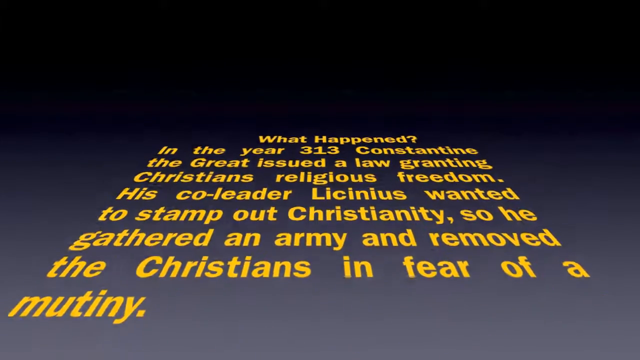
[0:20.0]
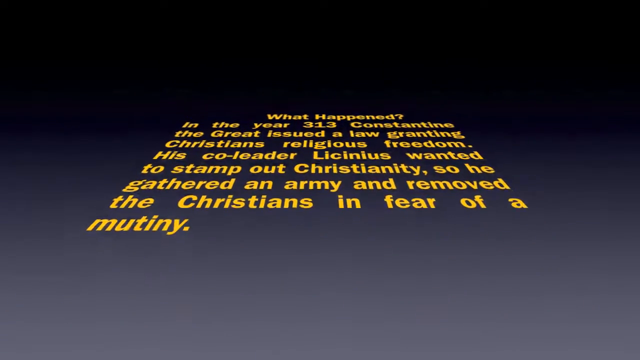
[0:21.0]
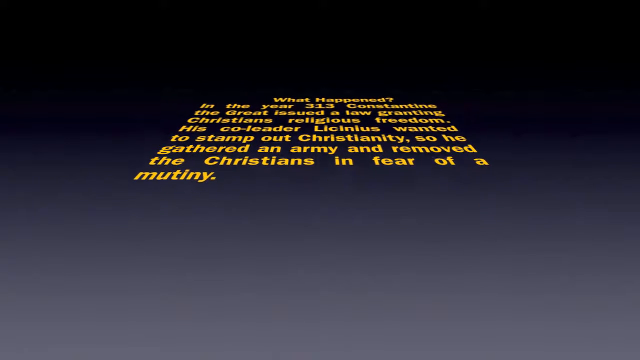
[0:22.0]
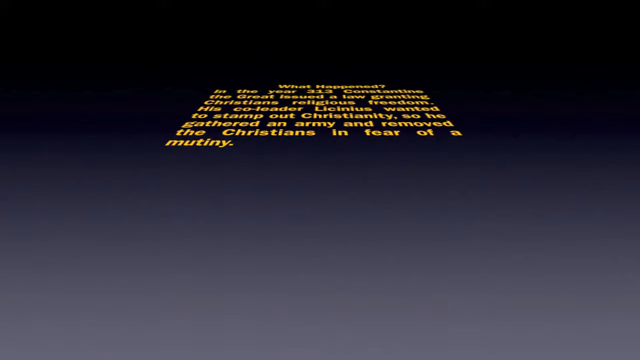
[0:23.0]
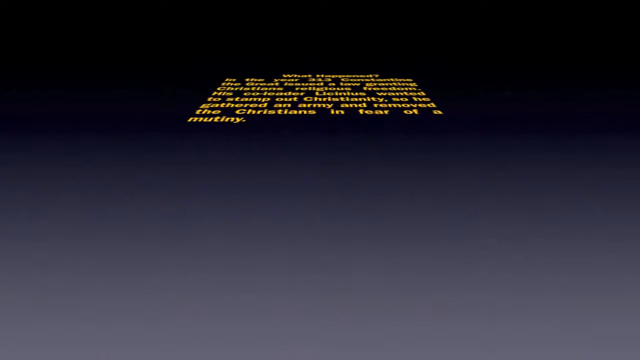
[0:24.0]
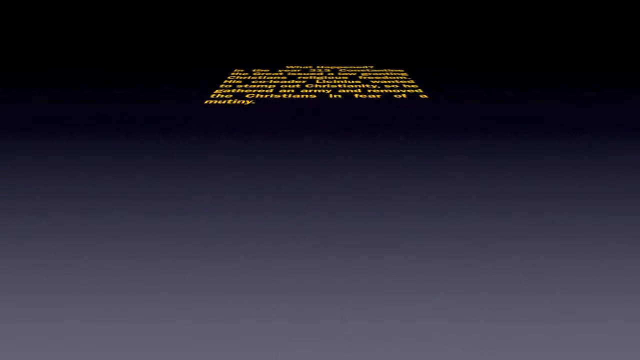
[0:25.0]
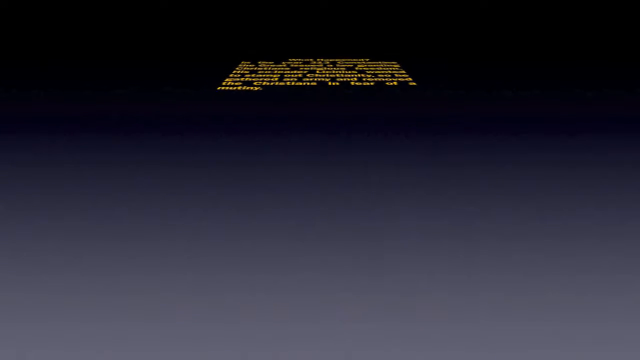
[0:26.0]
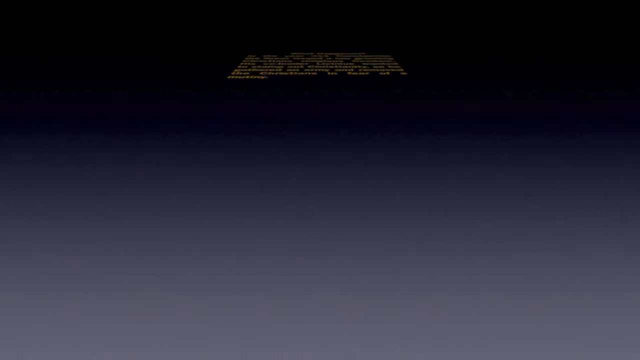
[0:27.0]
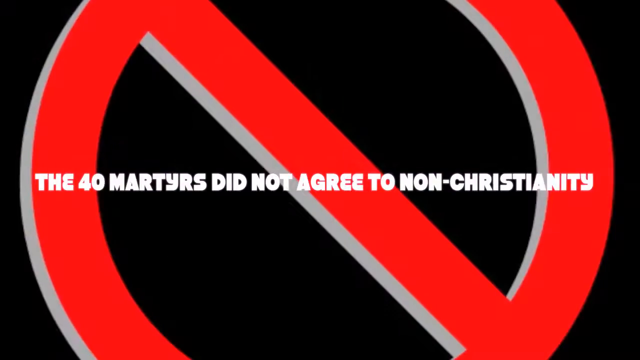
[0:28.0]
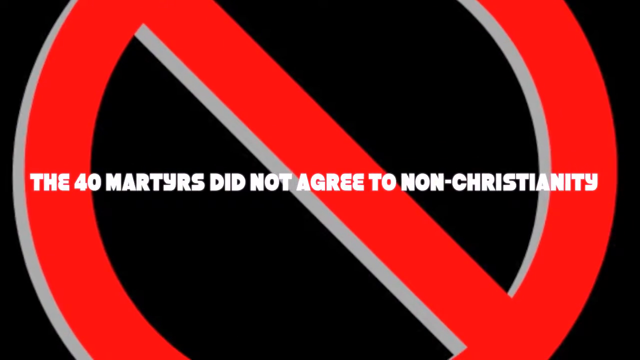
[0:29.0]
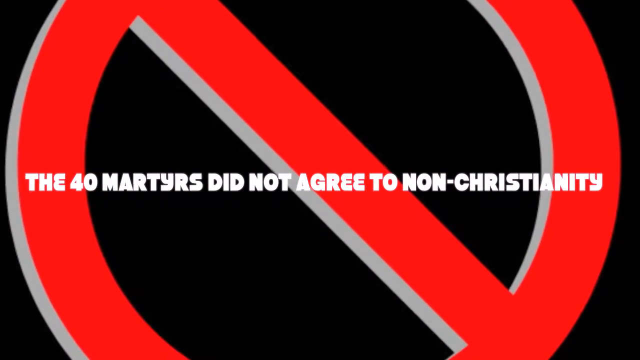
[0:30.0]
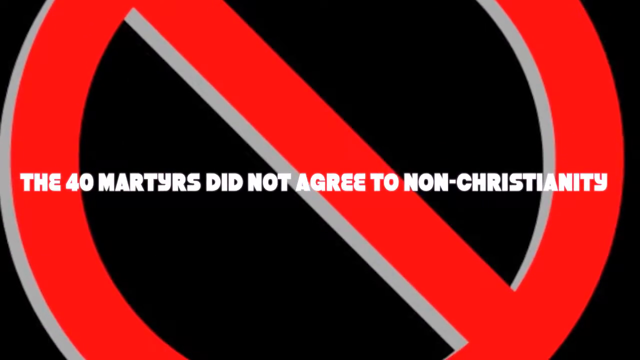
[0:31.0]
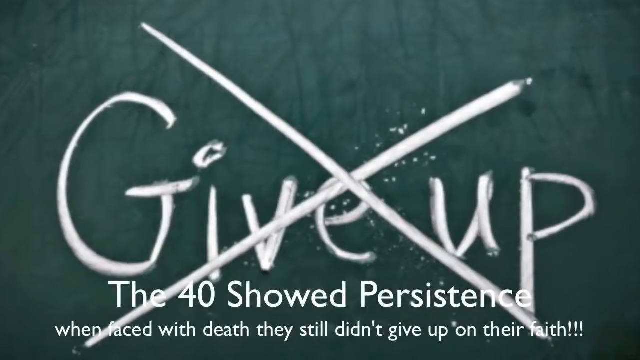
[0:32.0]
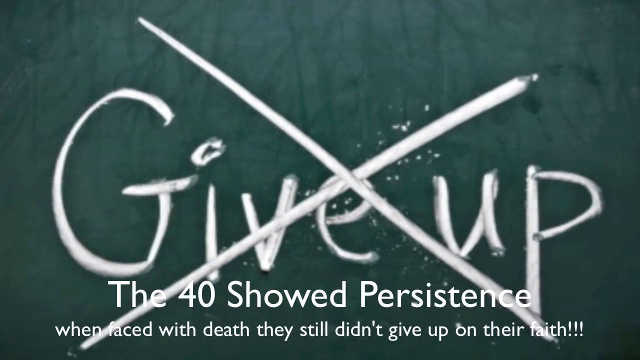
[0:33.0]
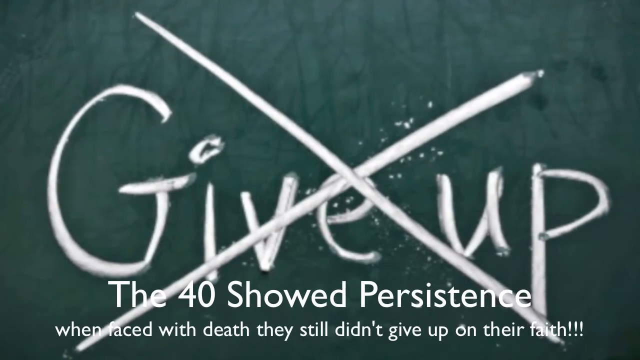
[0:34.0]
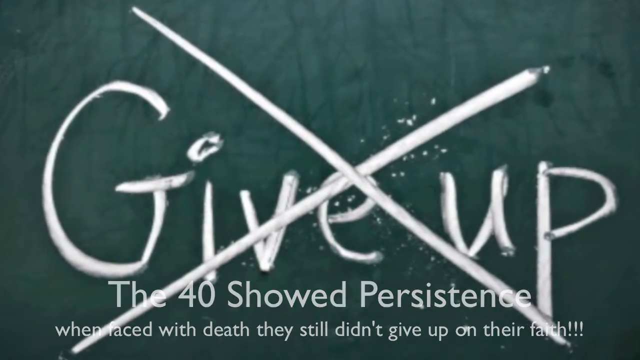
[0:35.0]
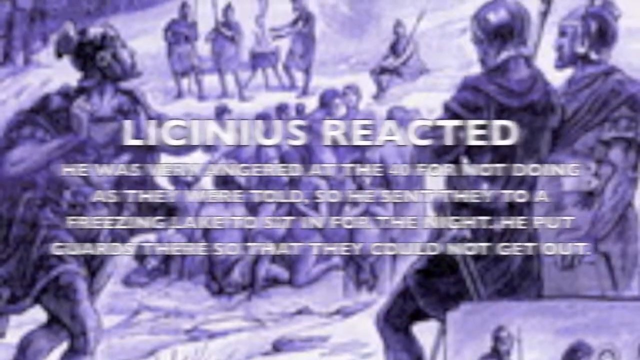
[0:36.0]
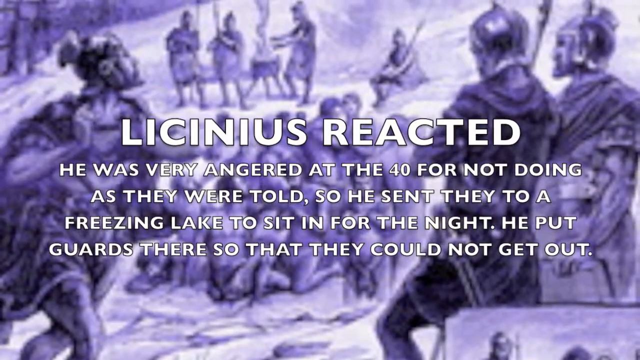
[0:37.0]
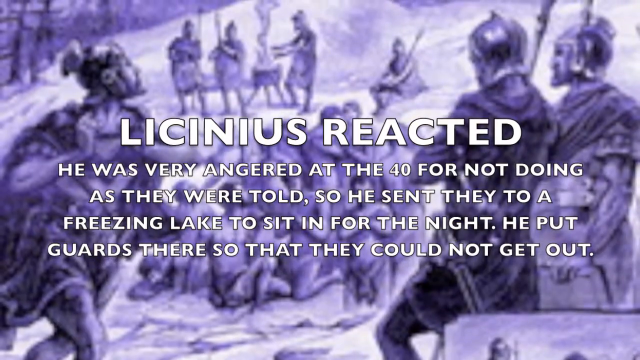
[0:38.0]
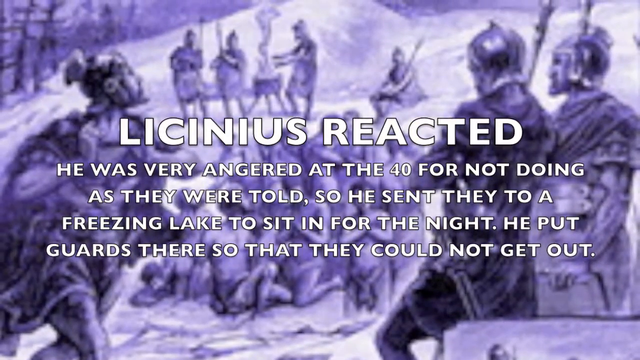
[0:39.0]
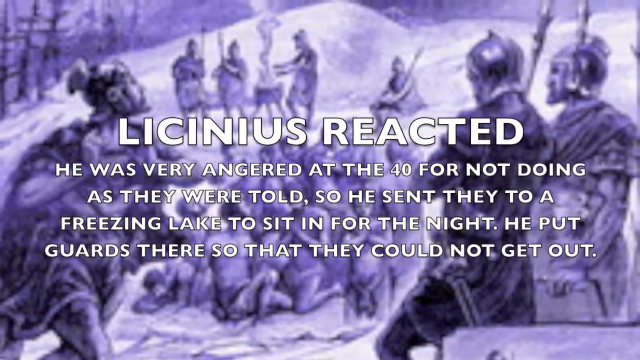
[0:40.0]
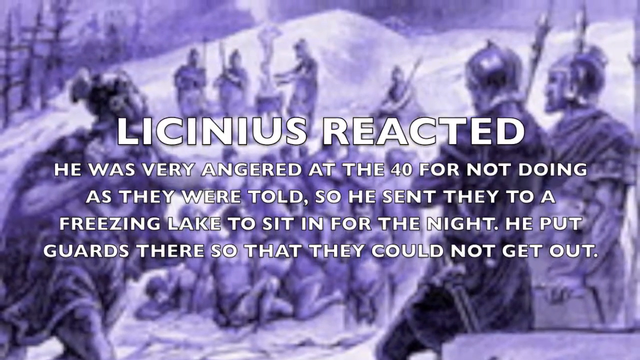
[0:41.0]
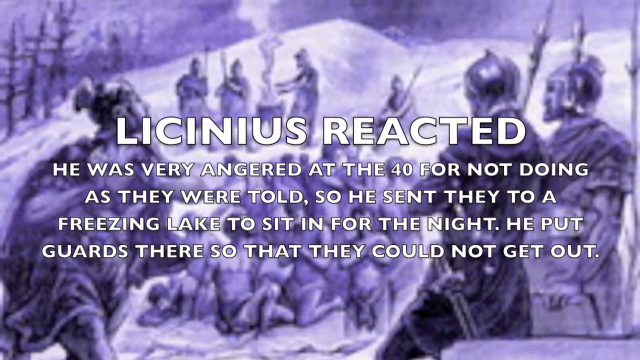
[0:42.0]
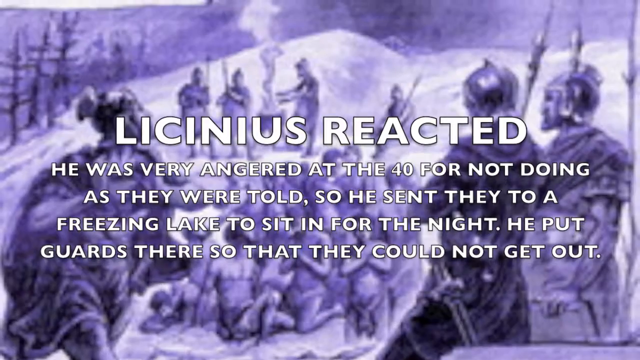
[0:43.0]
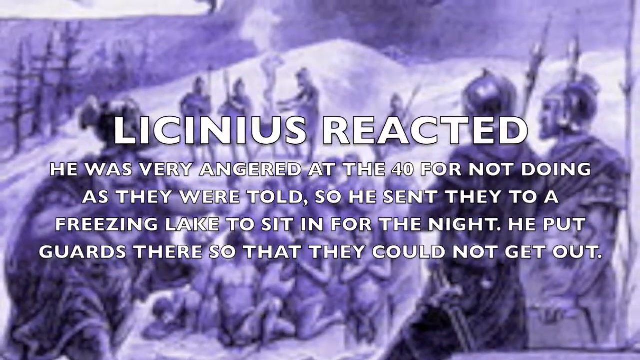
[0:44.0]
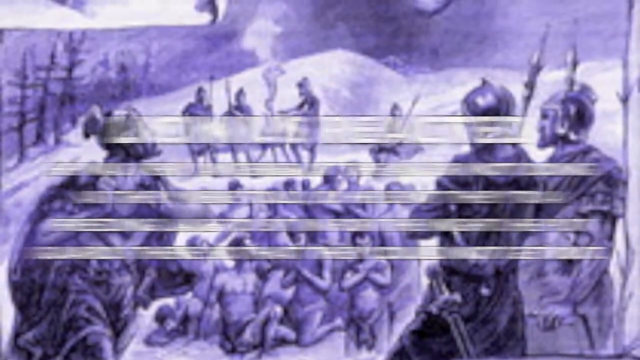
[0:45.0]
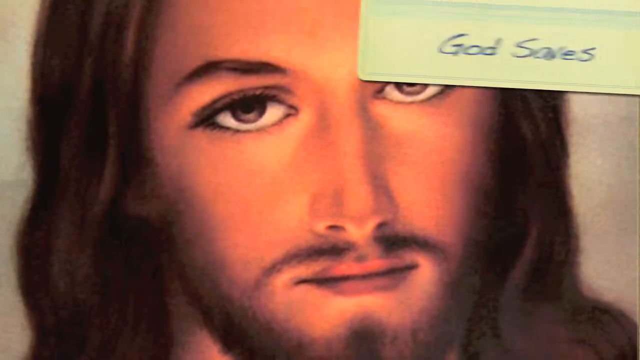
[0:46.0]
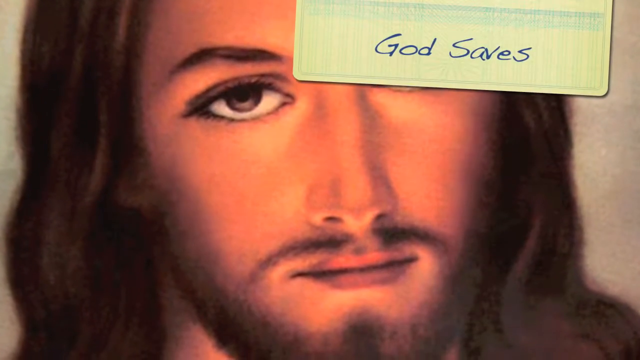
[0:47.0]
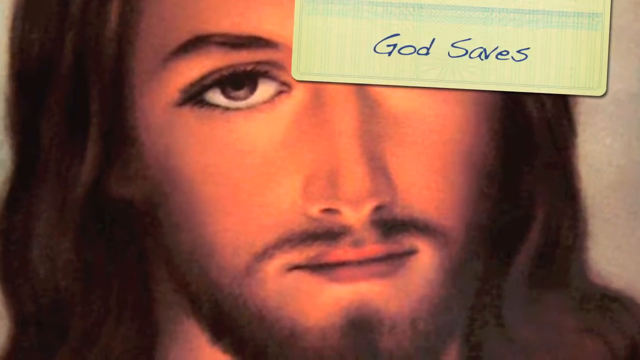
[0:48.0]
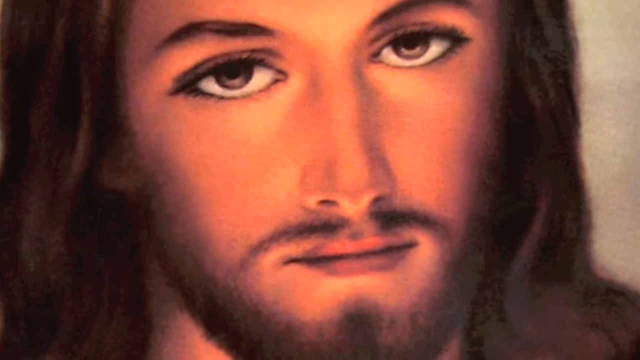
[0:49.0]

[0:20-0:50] The captions continue moving upward. They are yellow, on a light bluish-gray background, and read: "What happened? In the year 313, Constantine the Great issued a law granting Christians religious freedom. His co-leader, Licinus, wanted to stamp out Christianity. So he gathered an army and removed the Christians in fear of a mutiny." The captions float upward into the distance. A large caption then says "the 40 martyrs did not agree to non-Christianity," with a large red X symbol in the background. Captions at the bottom then say "the 40 showed persistence. When faced with death, they still didn't give up on their faith," while in the background the words "give up" are crossed out on a chalkboard. The background changes to show what looks like soldiers gathering up people, in a very purple color, with very large white captions in the middle. Then a picture of Jesus Christ appears.